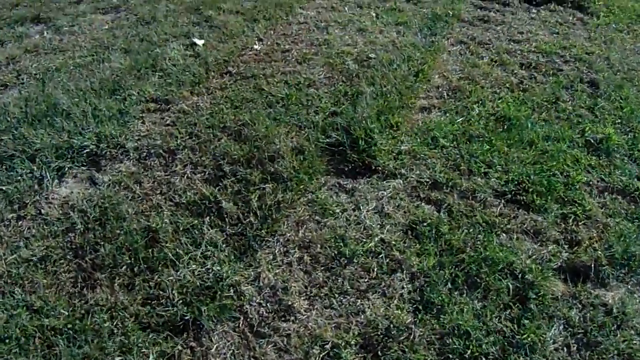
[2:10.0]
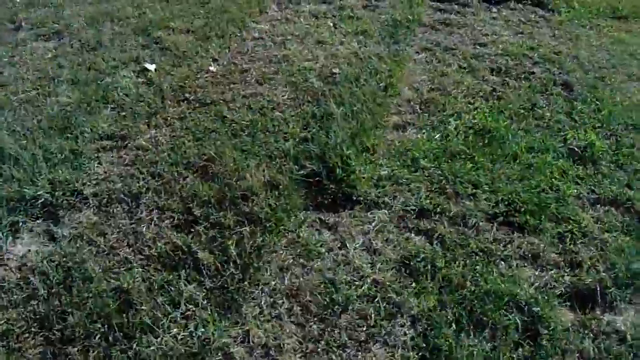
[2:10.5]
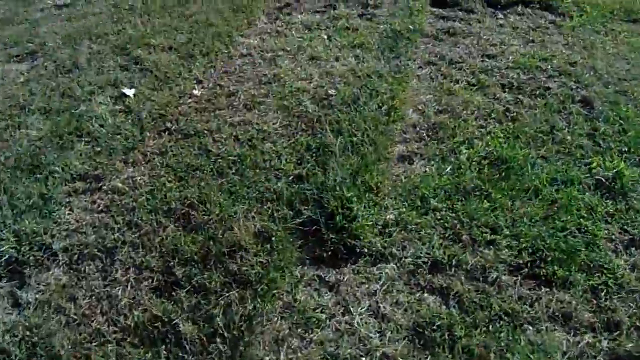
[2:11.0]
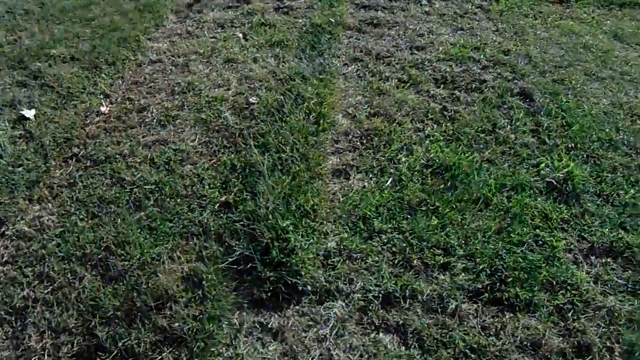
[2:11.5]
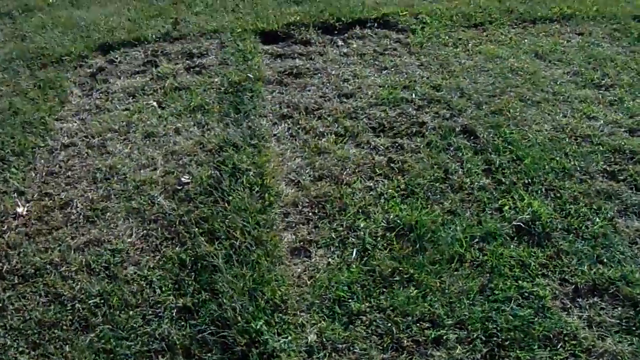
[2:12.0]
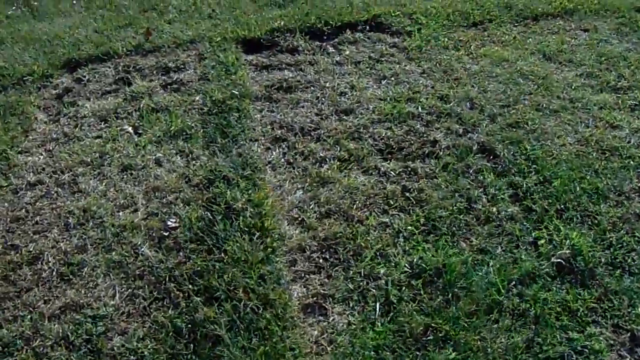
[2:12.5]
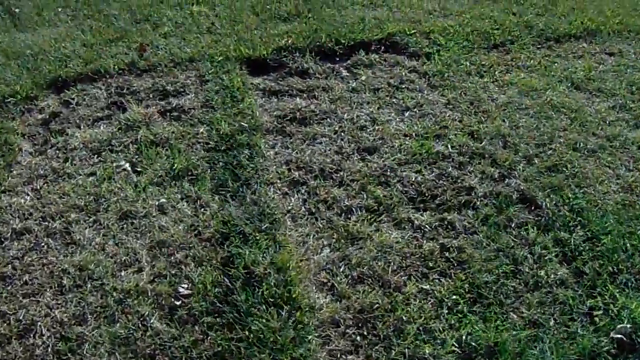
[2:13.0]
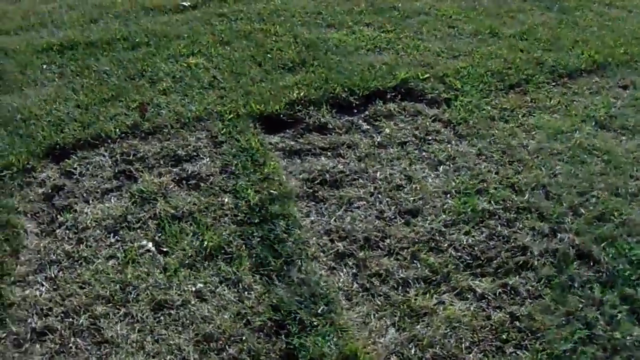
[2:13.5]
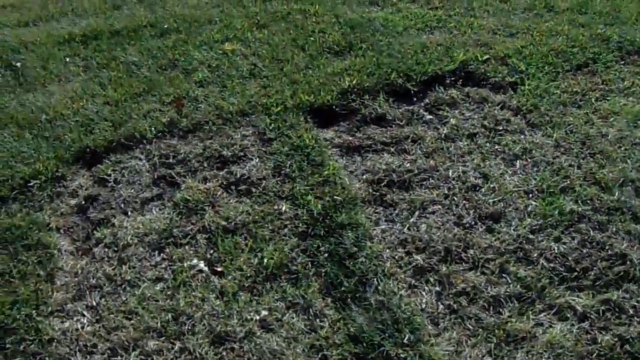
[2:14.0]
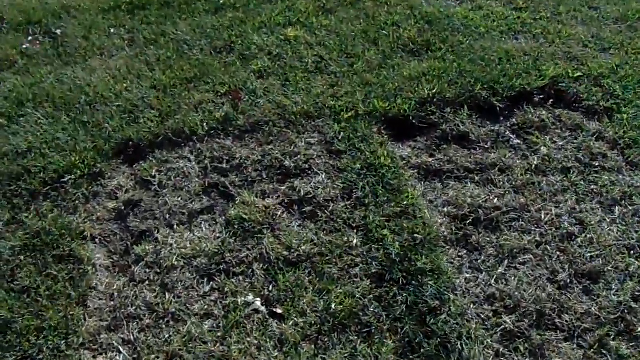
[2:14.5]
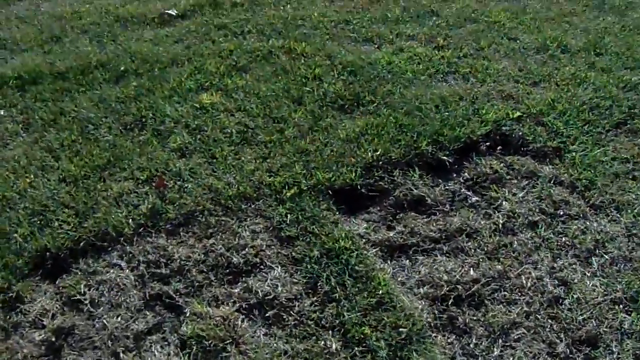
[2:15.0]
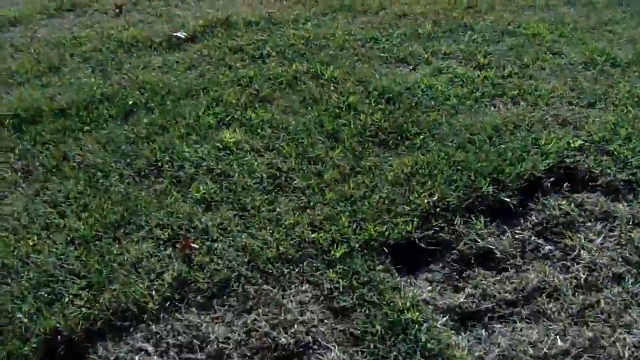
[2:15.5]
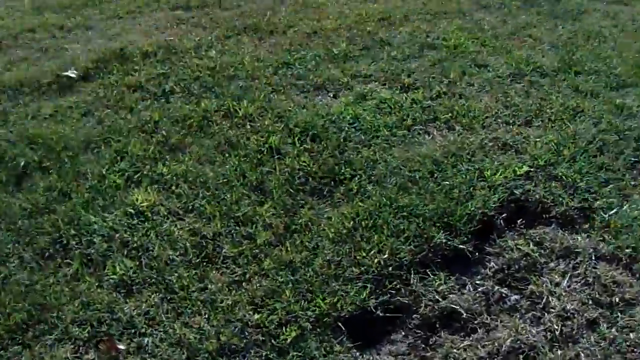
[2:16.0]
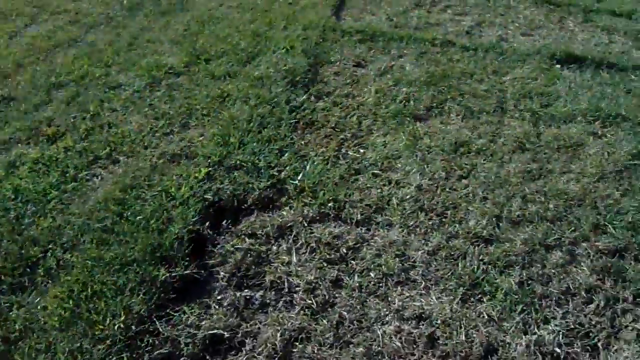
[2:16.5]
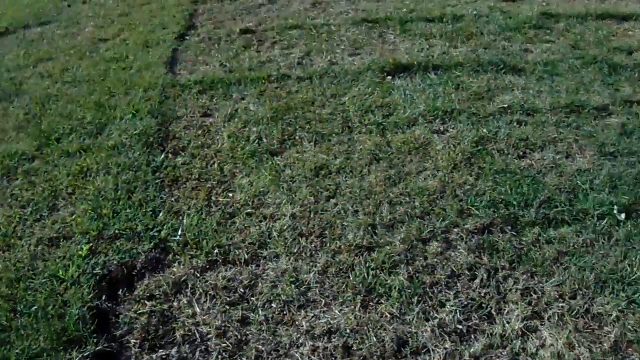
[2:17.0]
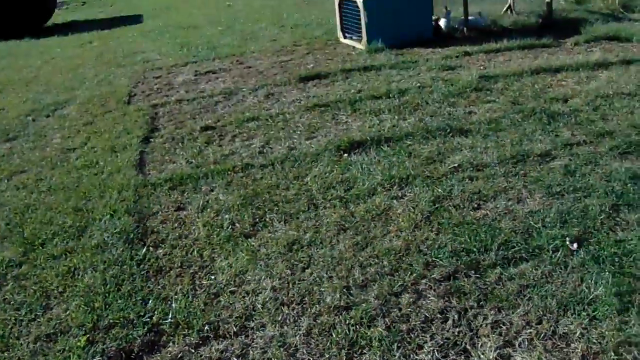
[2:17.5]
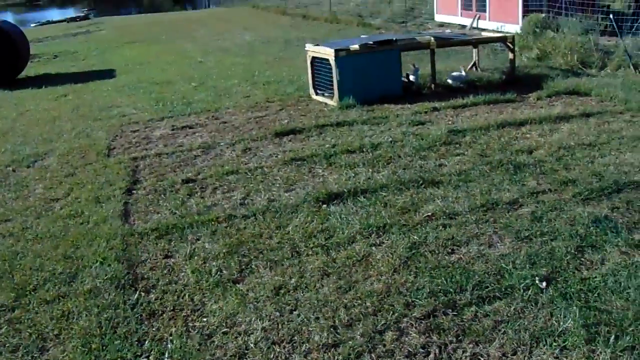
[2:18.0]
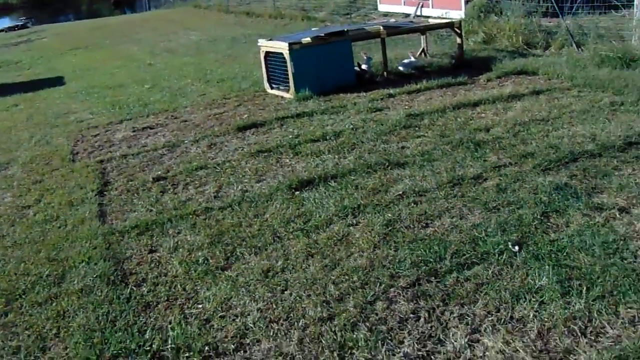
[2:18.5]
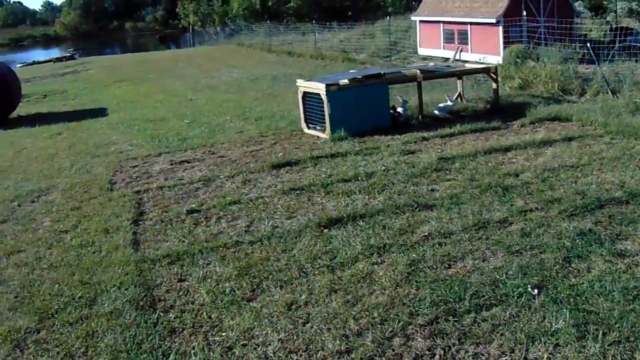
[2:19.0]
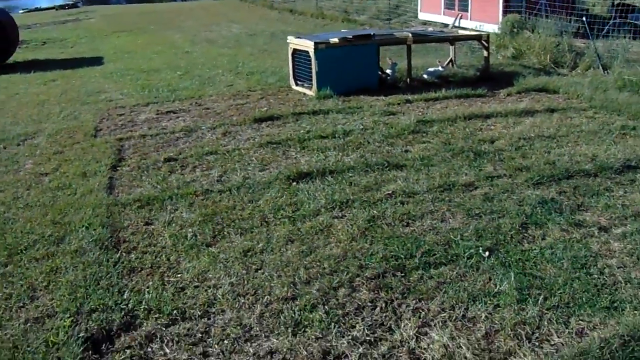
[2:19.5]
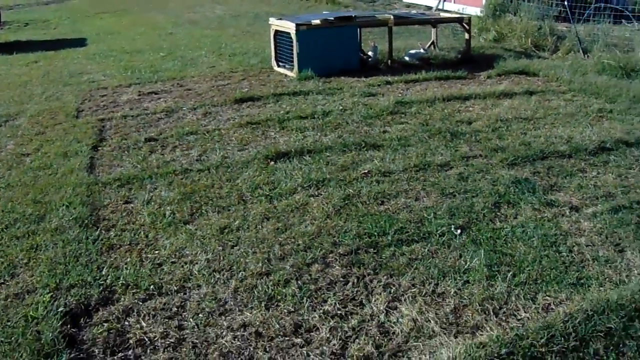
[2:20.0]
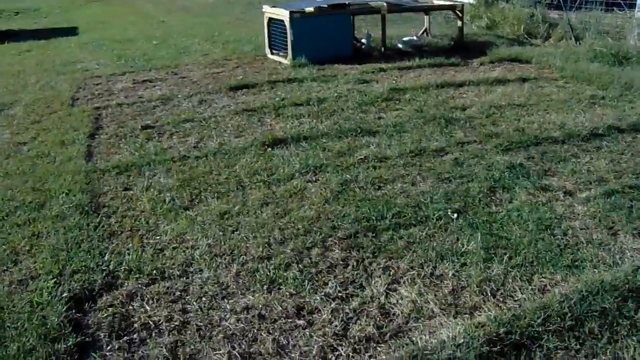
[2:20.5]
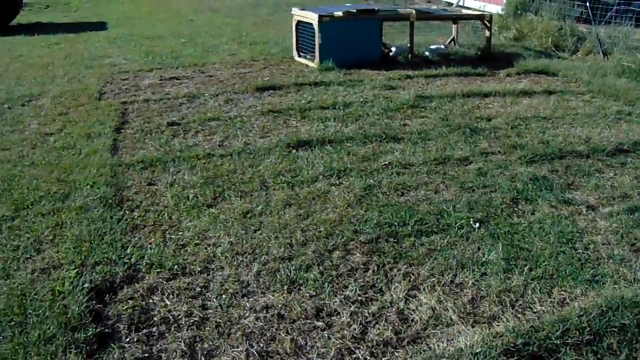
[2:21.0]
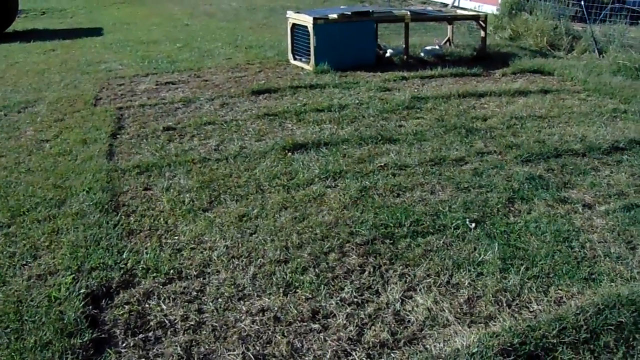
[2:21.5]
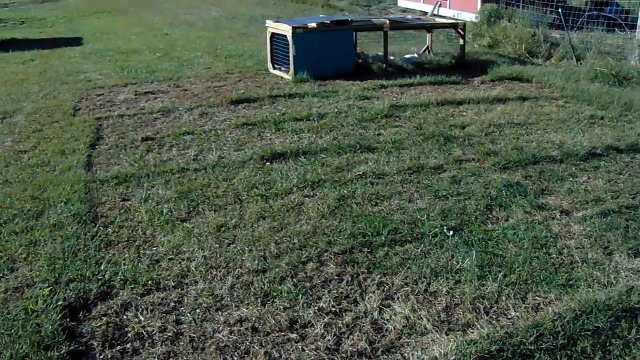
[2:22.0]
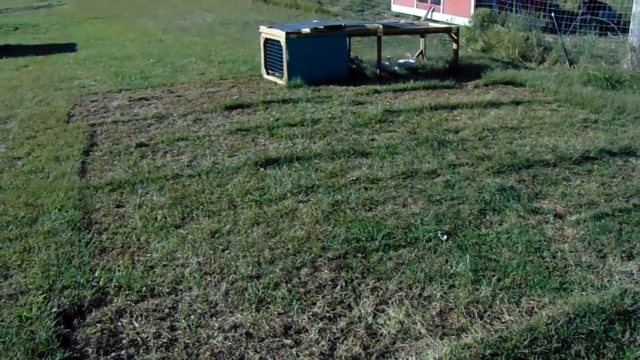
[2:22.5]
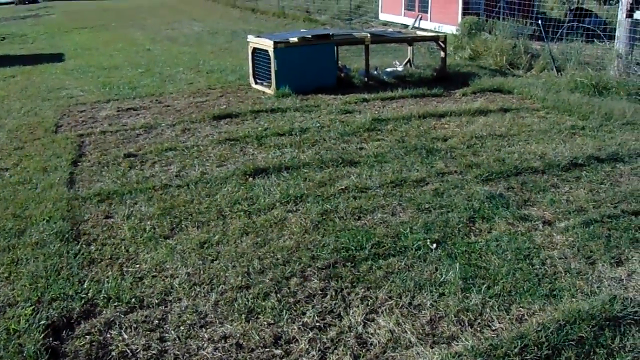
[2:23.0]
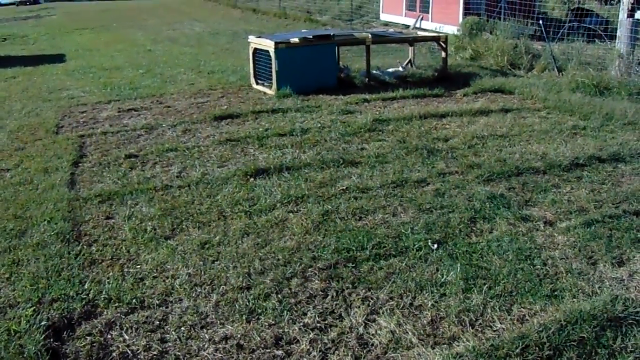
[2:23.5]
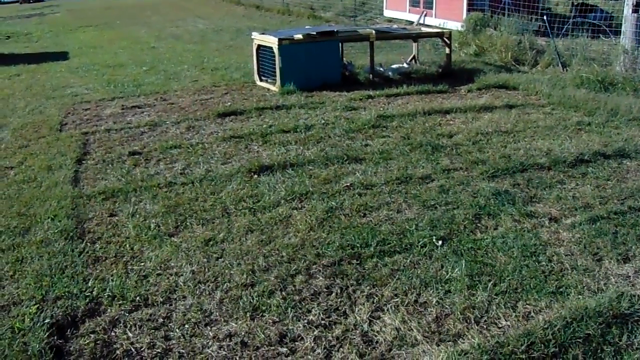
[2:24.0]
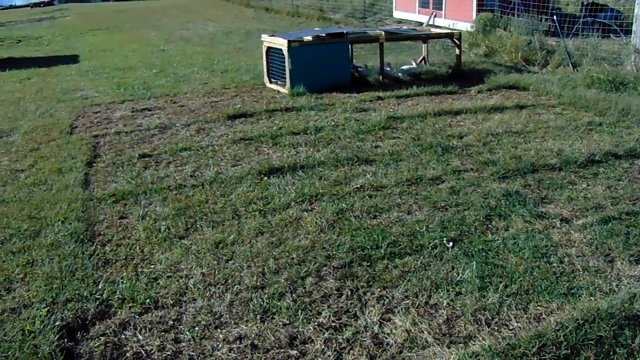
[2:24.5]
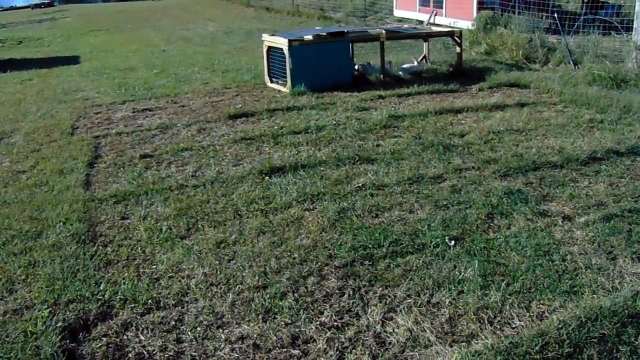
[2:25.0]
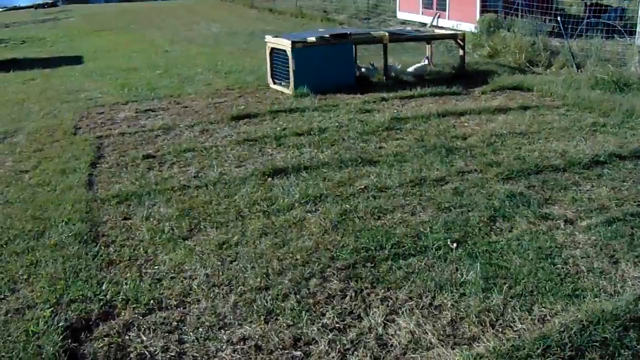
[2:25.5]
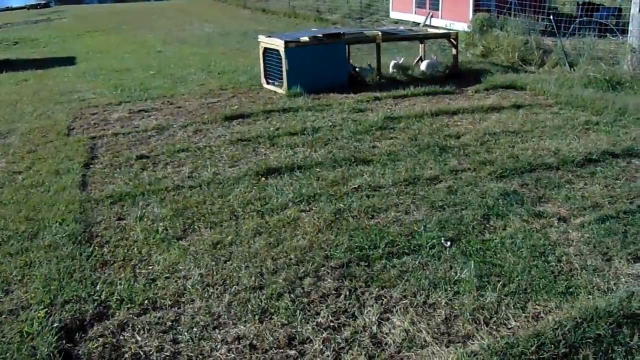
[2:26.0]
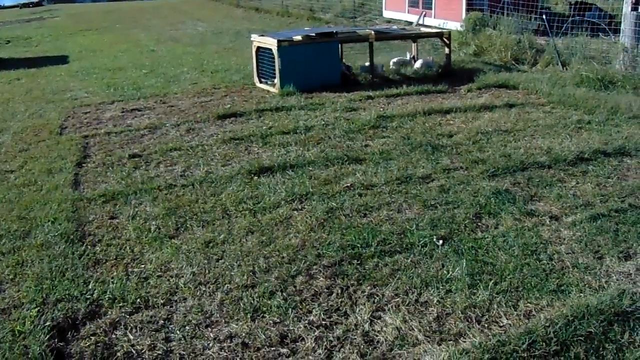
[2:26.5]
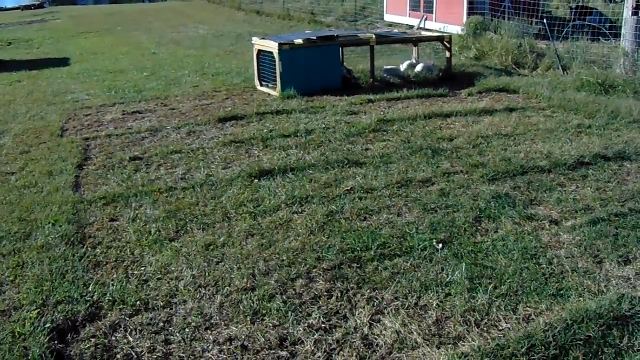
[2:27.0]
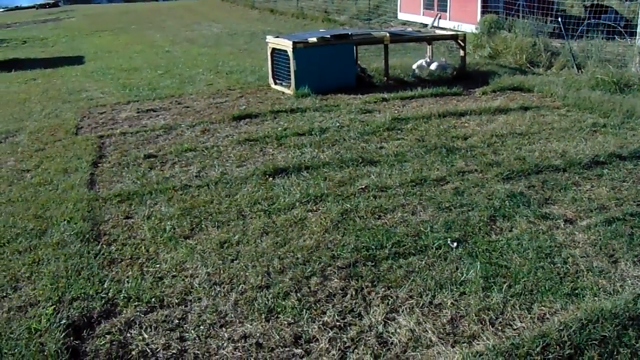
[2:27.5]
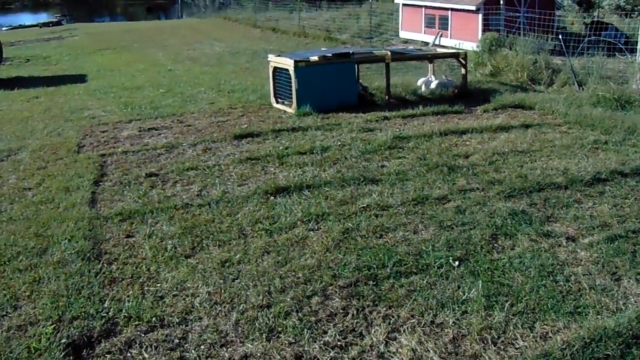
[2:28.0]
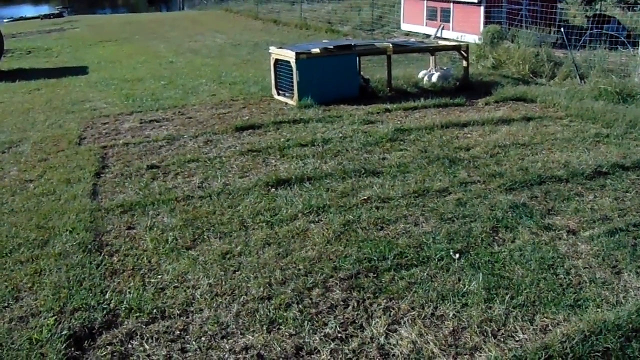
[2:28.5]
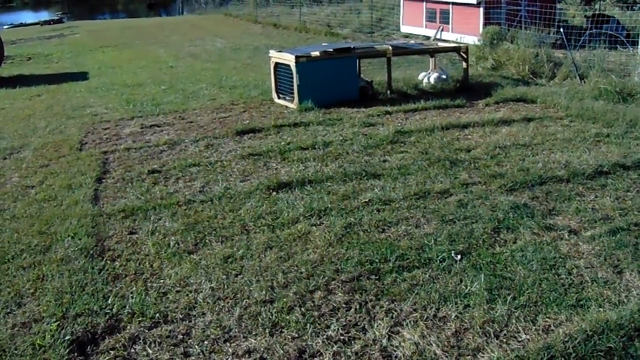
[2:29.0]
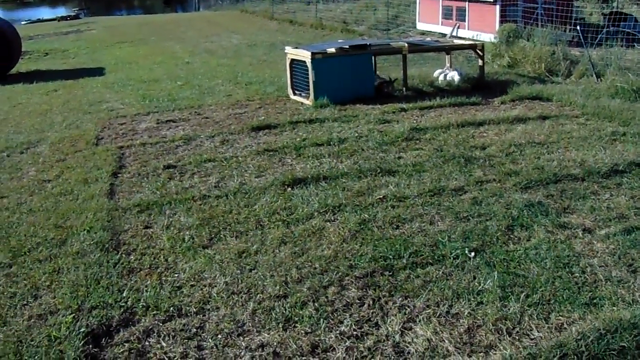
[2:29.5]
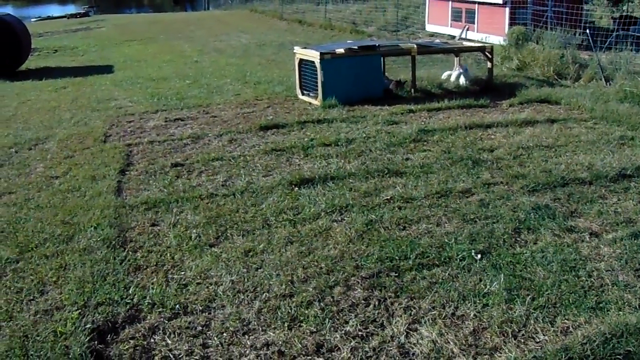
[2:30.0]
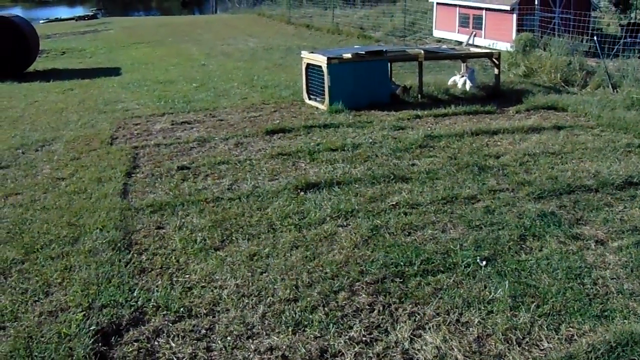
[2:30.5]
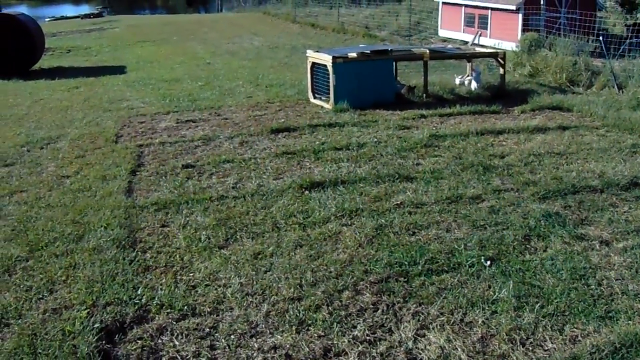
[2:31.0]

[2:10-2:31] The shot shows a piece of land with some parts where there is little grass and others with quite lush vegetation. The man then raises the camera and frames the rest of the meadow, revealing different structures: a white and red structure with small windows at the bottom, and a cage formed by rather thin wooden beams and dark-colored panels. Inside the cage, very small white rabbits jump here and there on the grass. At the end of the cage, which is in the center of the frame, there is a fairly regular grid, probably made of very thin wires. Part of a lake is visible in the upper left corner of the frame, with some trees reflected in the water.